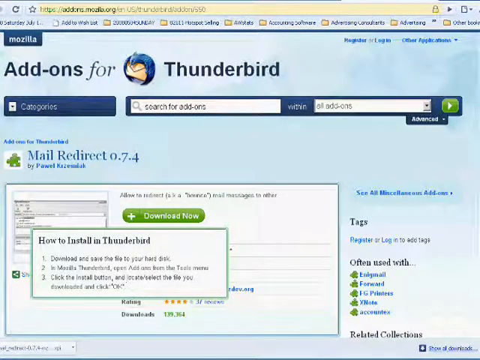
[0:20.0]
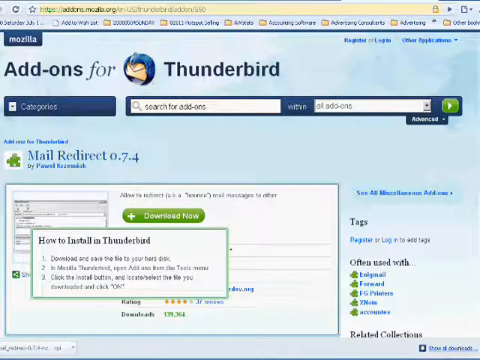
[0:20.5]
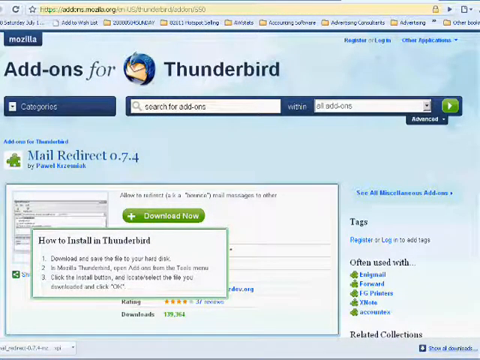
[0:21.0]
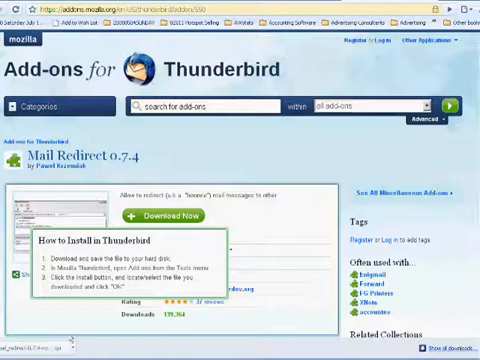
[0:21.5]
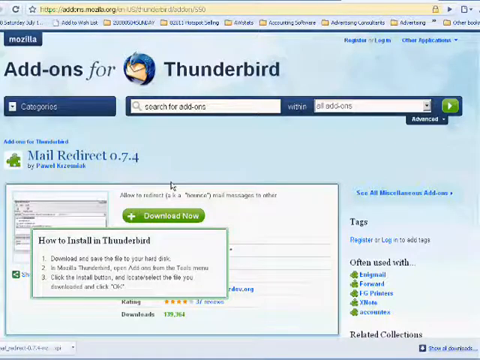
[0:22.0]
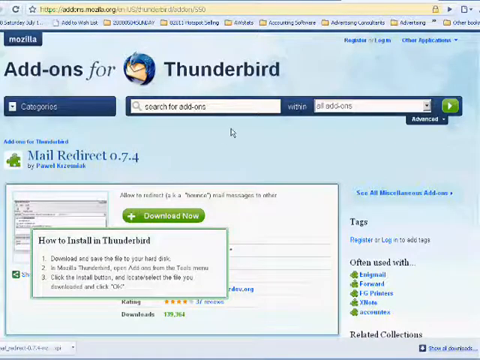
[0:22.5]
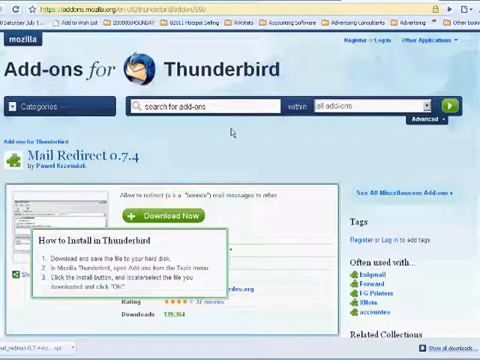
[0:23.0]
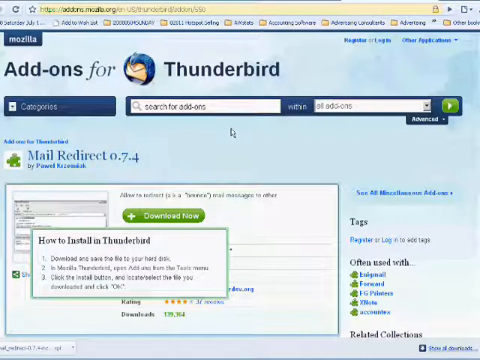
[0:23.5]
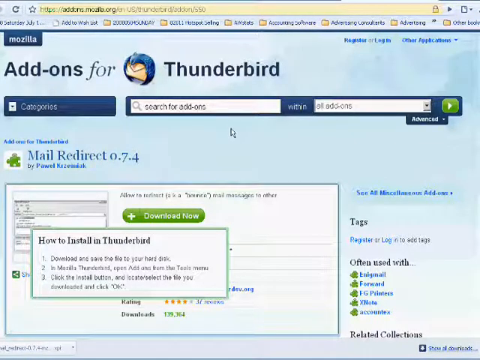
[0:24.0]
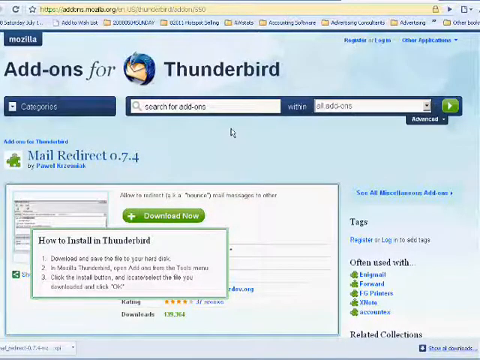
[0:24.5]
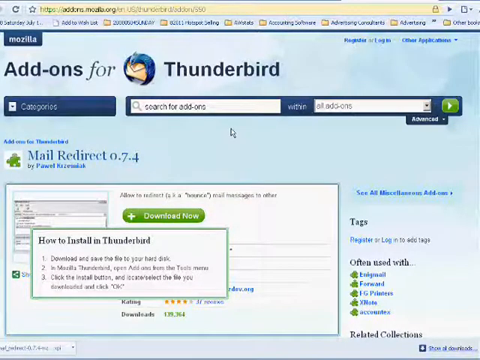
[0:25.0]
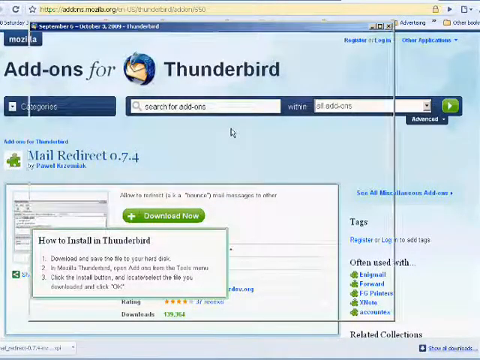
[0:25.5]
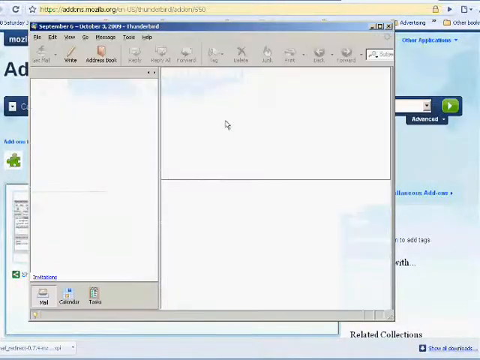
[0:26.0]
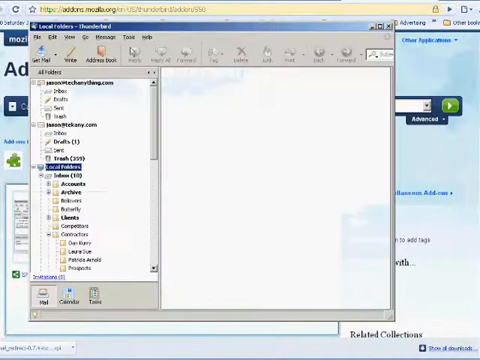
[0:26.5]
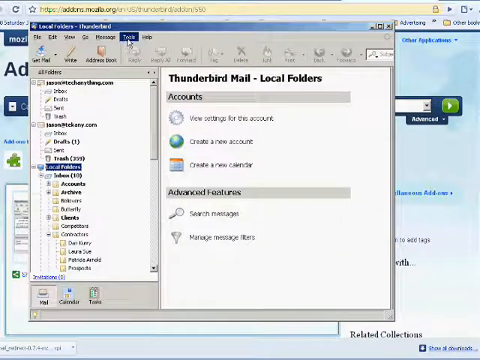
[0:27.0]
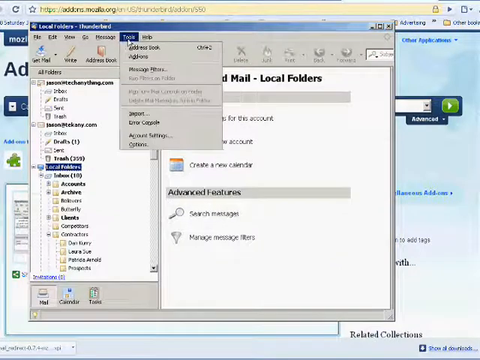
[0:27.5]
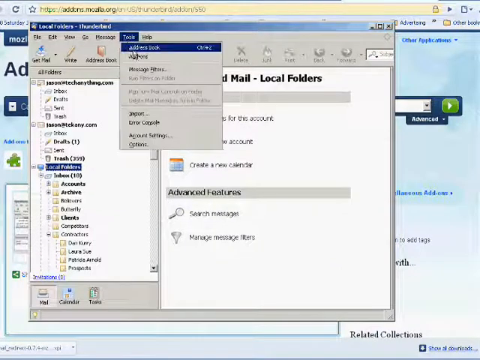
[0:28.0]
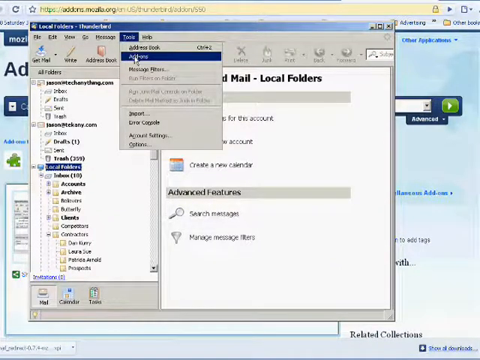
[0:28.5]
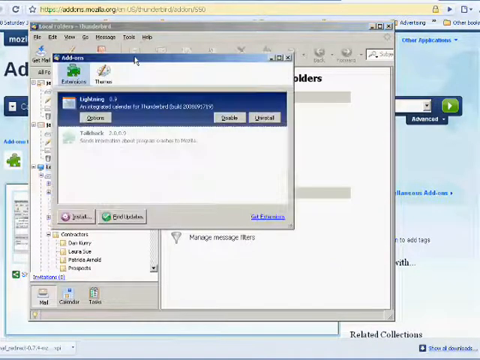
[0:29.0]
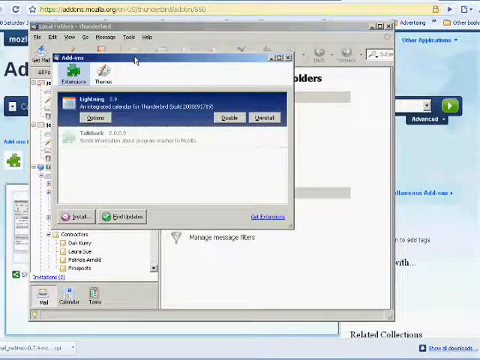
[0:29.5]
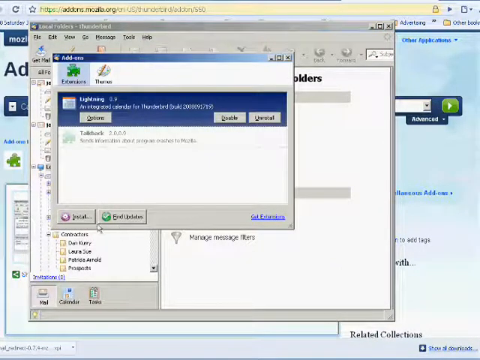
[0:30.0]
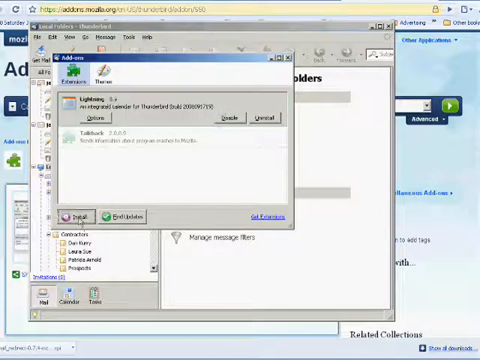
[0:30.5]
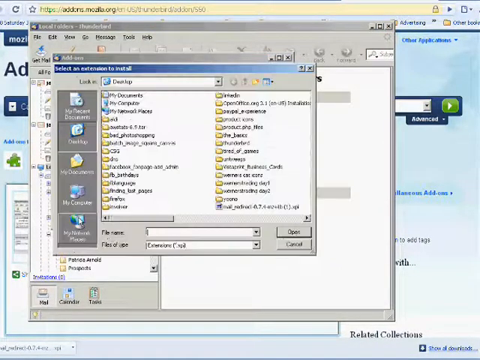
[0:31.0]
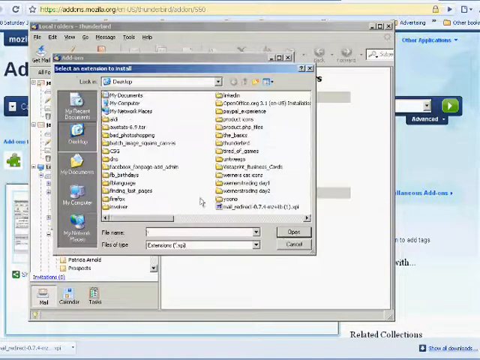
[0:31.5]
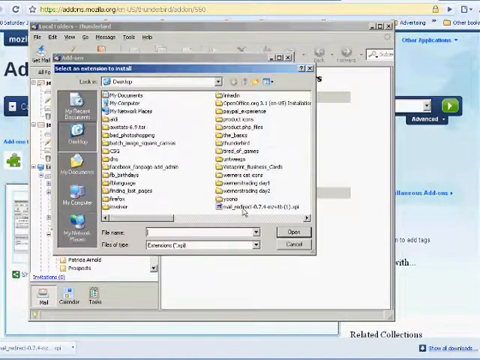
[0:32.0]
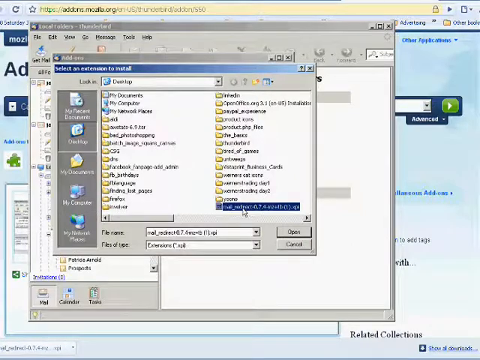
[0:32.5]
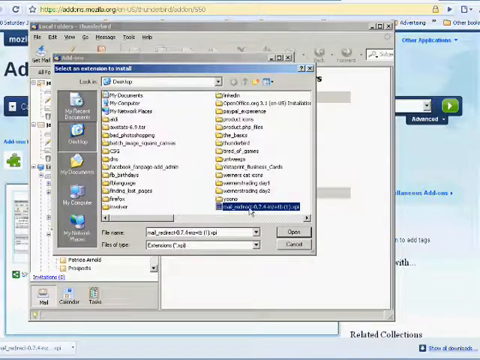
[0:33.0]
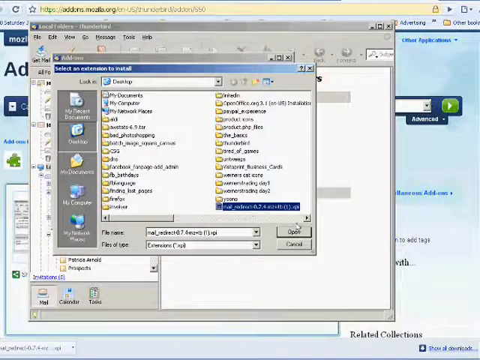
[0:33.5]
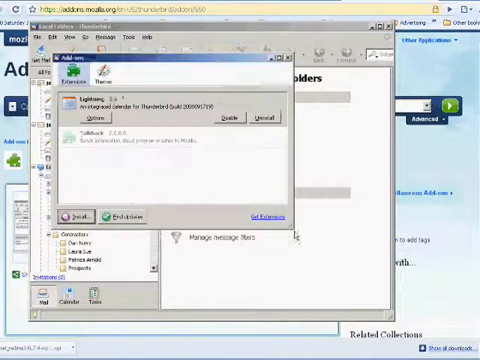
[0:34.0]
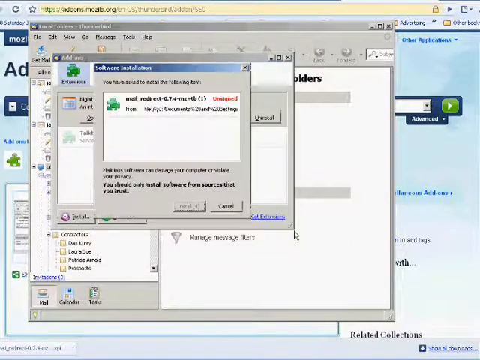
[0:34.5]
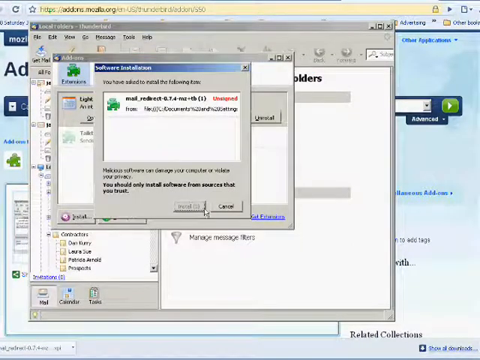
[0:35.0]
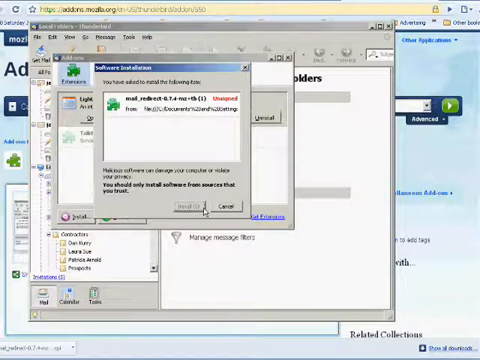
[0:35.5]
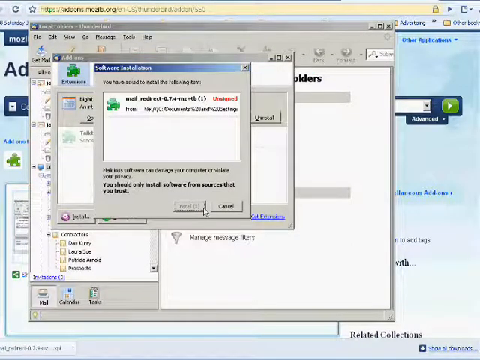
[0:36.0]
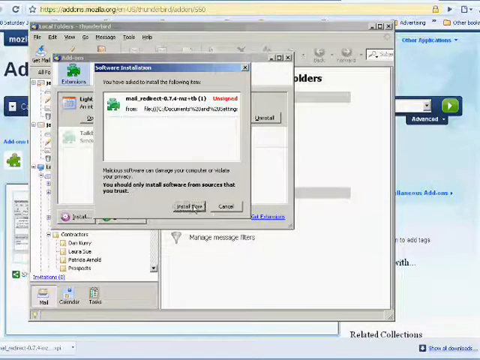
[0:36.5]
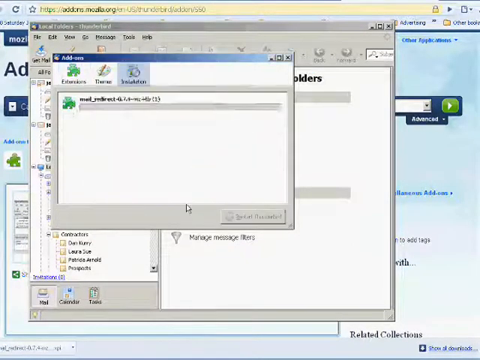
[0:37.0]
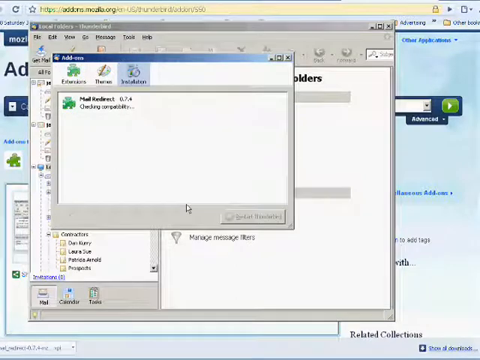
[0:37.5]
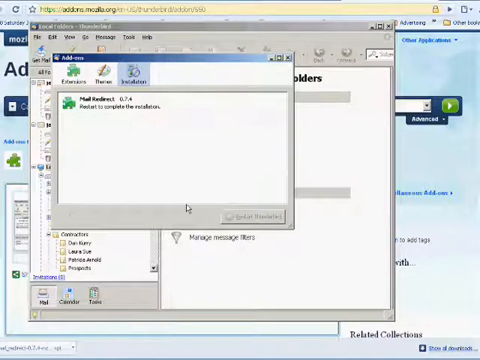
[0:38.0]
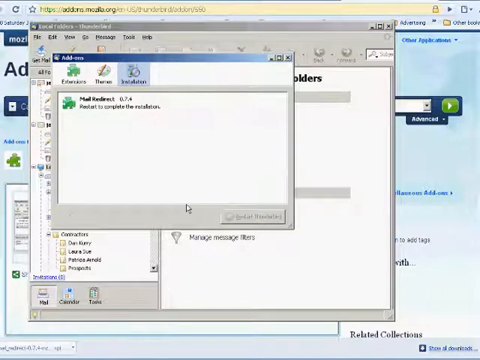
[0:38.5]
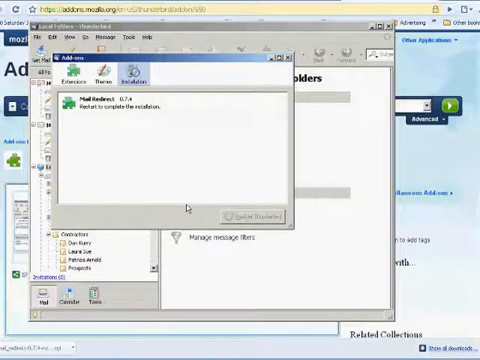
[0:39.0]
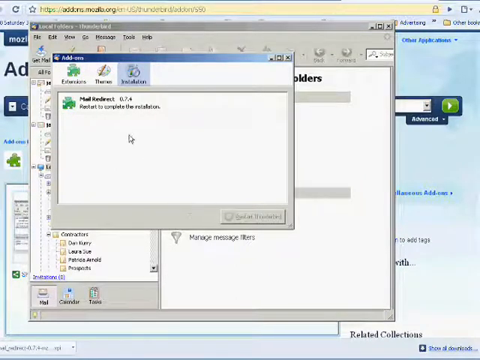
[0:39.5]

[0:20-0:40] The original add-ons for Thunderbird window is still shown, along with the pop-up window containing the instructions on how to install the add-on in Thunderbird. The user goes step by step through installing Mail Redirect in Thunderbird. A pop-up window comes up, apparently showing the local folders on the computer; the user clicks the tools menu and selects add-ons. They select an extension to install, choose the file they just downloaded, click open, and click install now. The screen shows the file downloading and then gives instructions to restart to activate it.